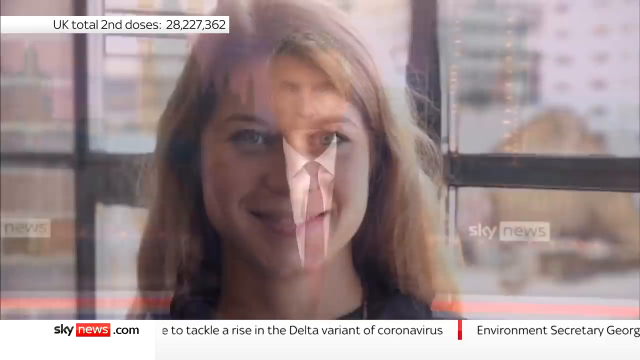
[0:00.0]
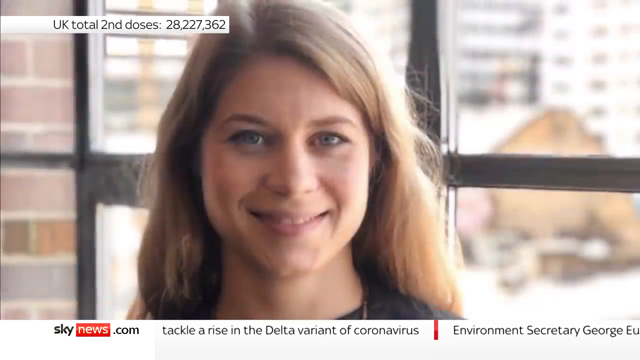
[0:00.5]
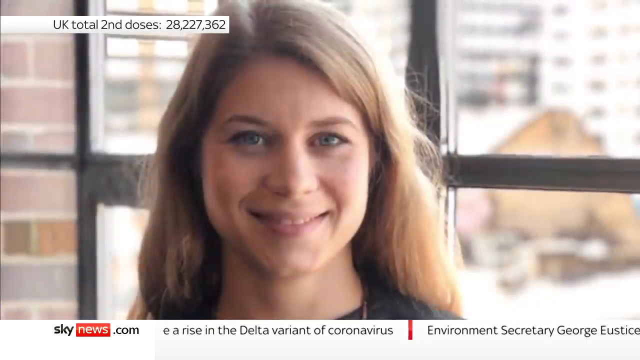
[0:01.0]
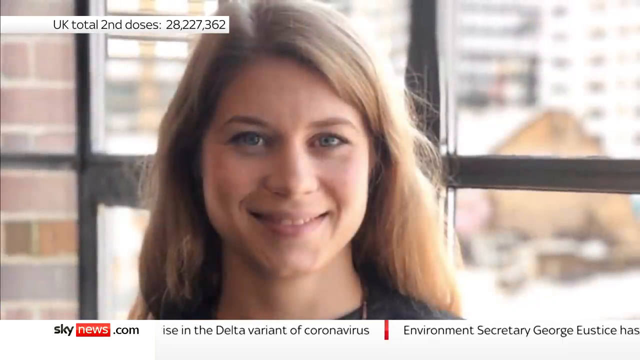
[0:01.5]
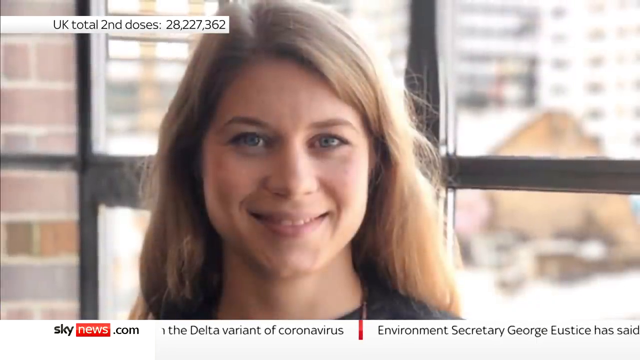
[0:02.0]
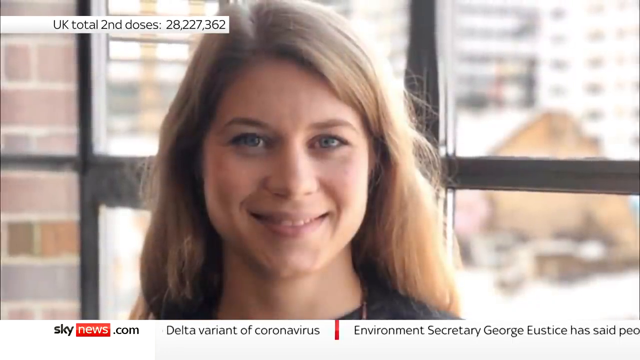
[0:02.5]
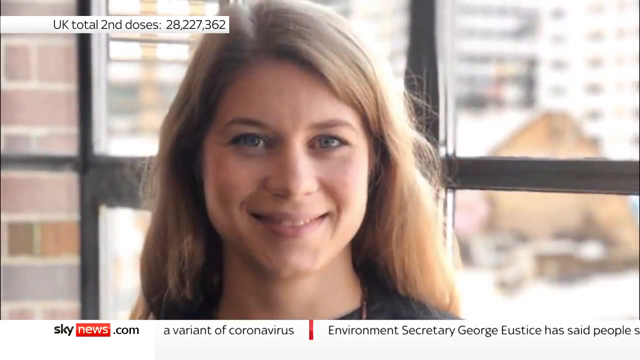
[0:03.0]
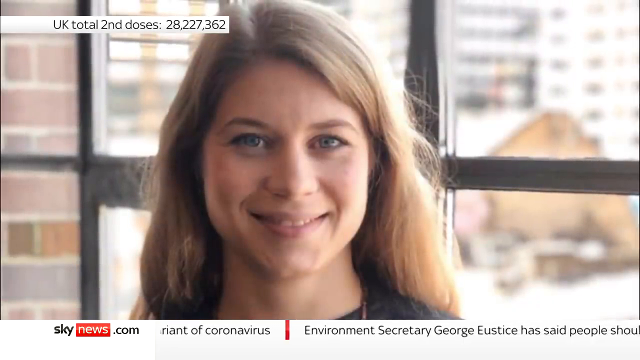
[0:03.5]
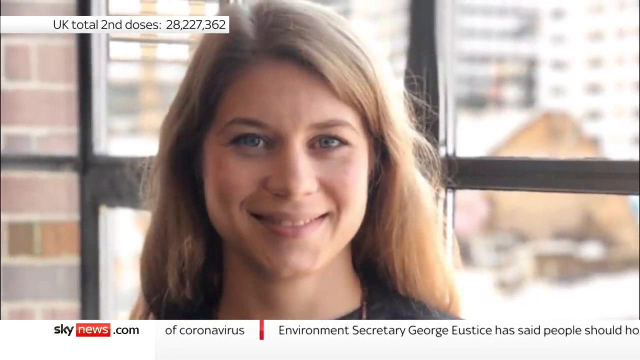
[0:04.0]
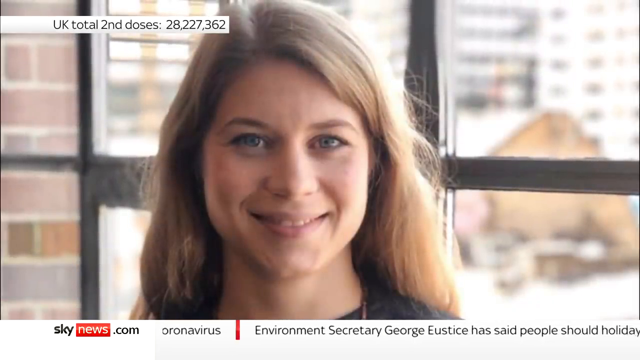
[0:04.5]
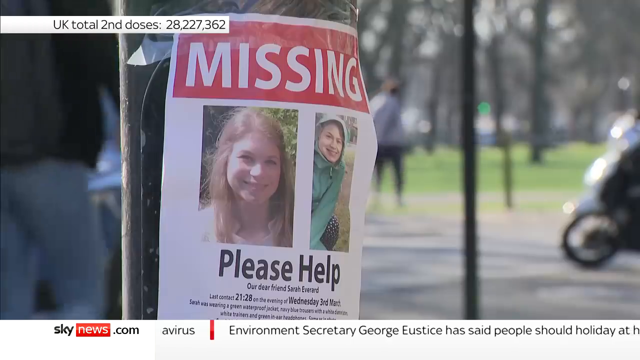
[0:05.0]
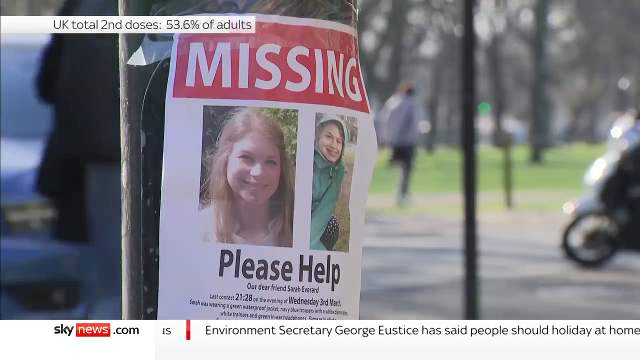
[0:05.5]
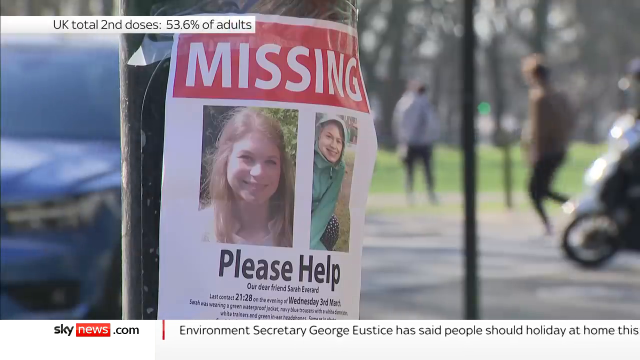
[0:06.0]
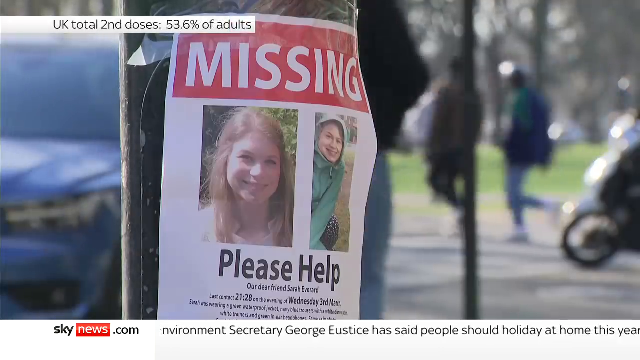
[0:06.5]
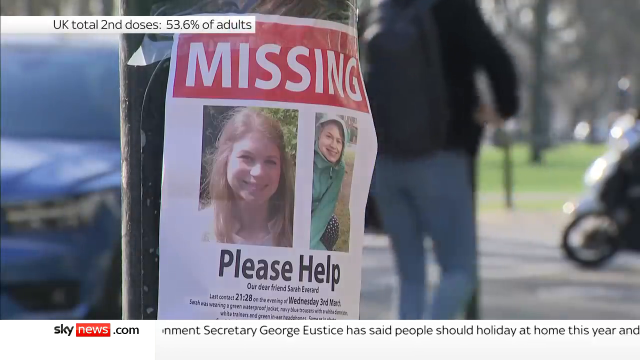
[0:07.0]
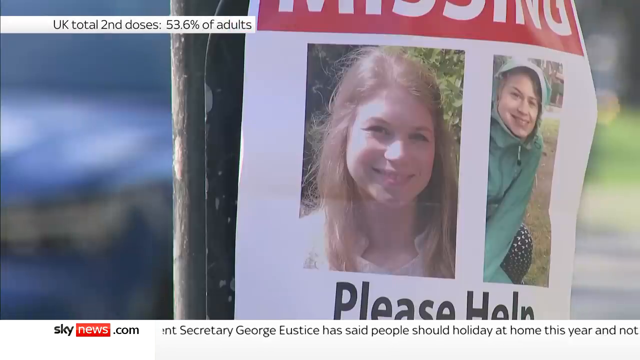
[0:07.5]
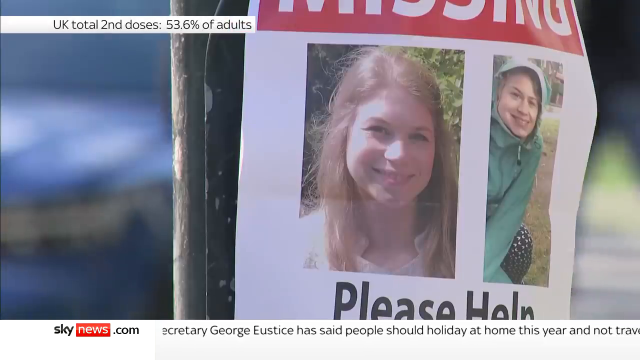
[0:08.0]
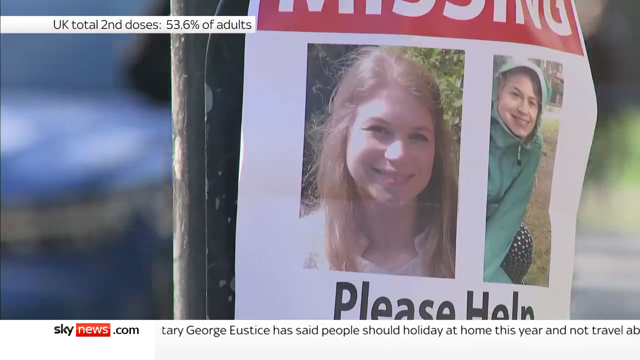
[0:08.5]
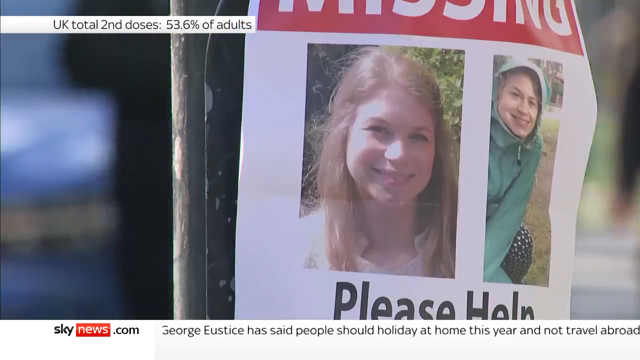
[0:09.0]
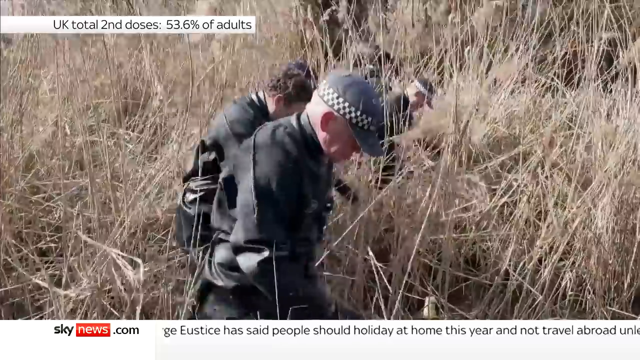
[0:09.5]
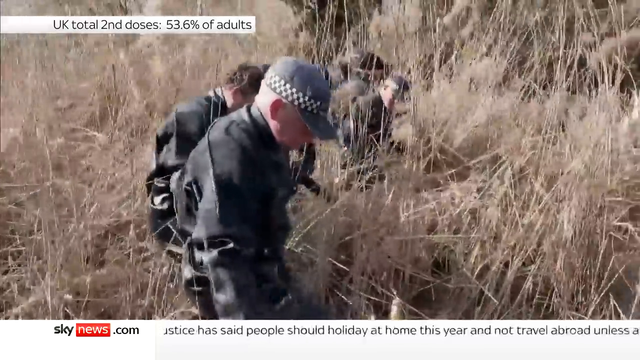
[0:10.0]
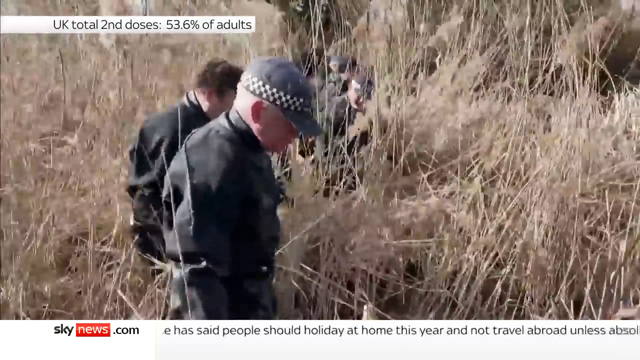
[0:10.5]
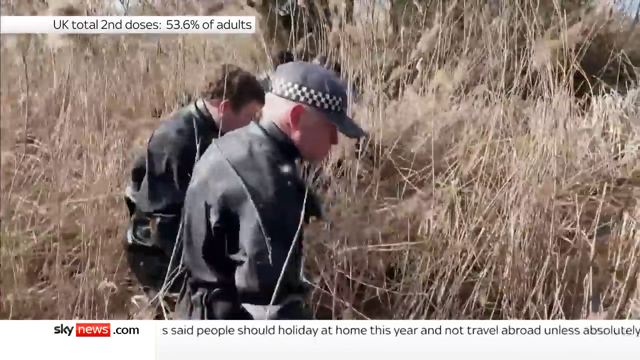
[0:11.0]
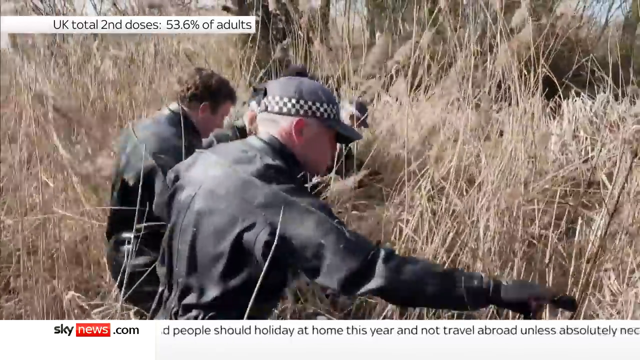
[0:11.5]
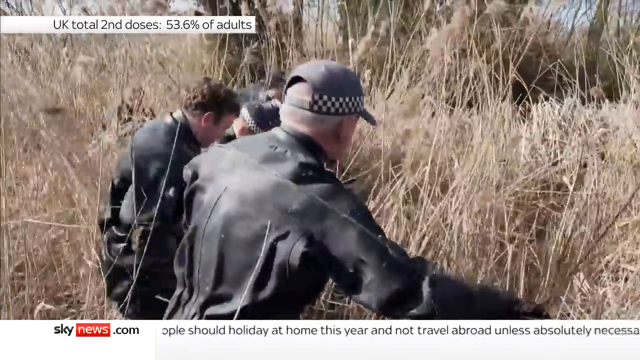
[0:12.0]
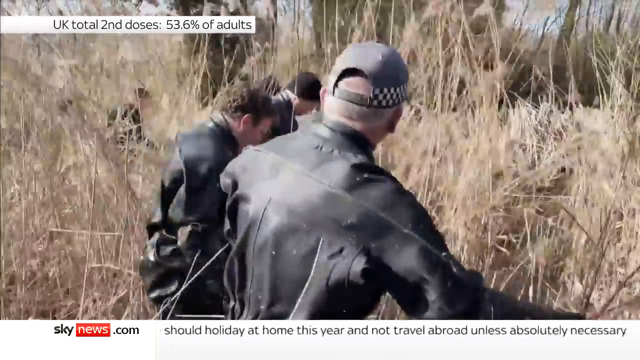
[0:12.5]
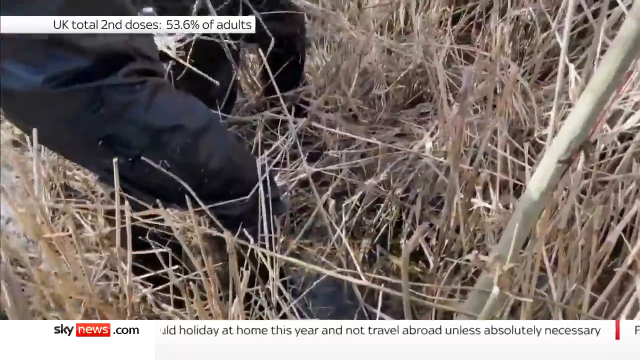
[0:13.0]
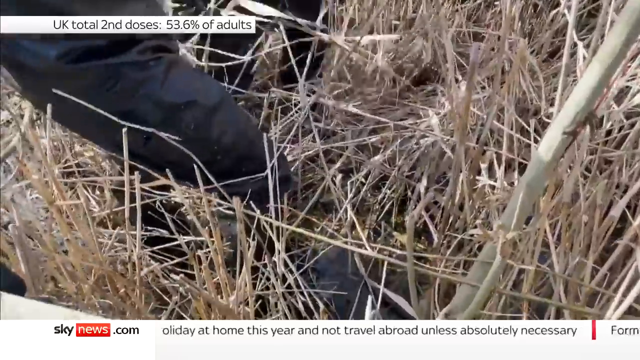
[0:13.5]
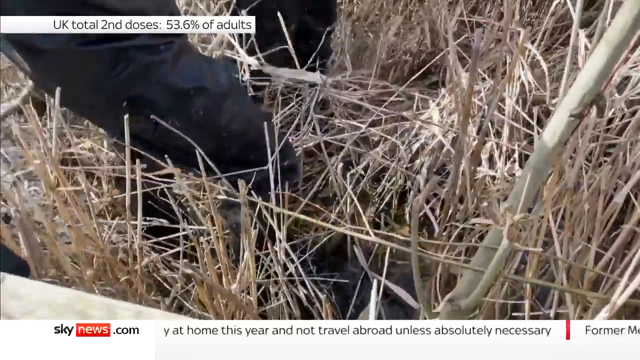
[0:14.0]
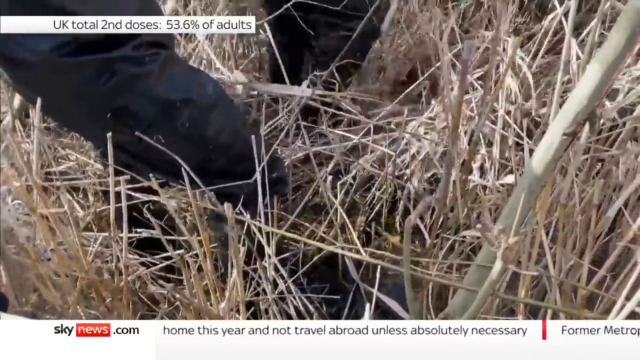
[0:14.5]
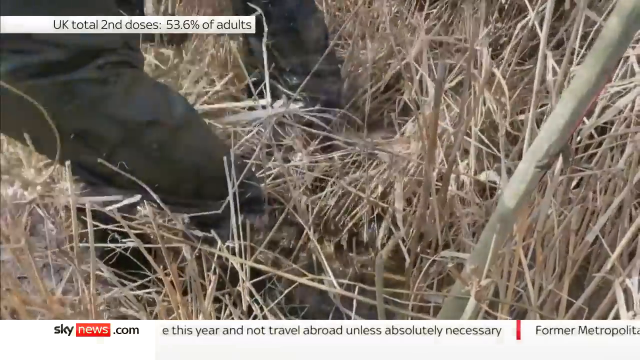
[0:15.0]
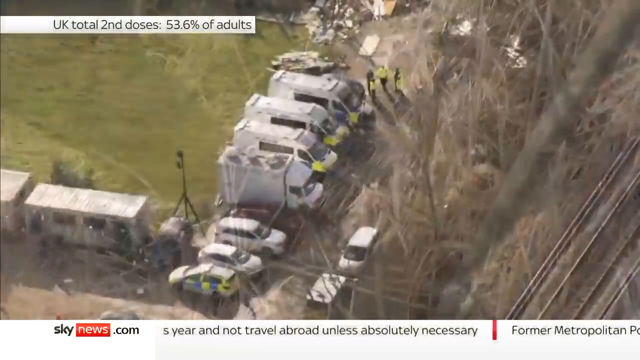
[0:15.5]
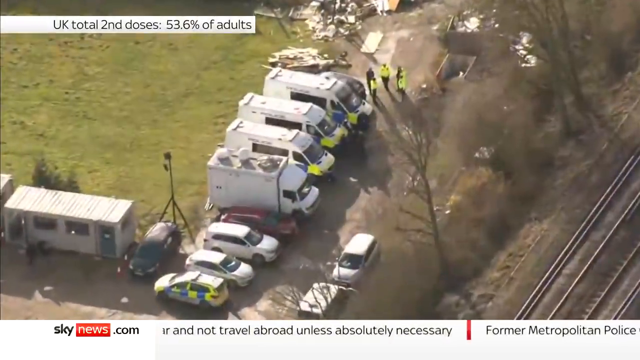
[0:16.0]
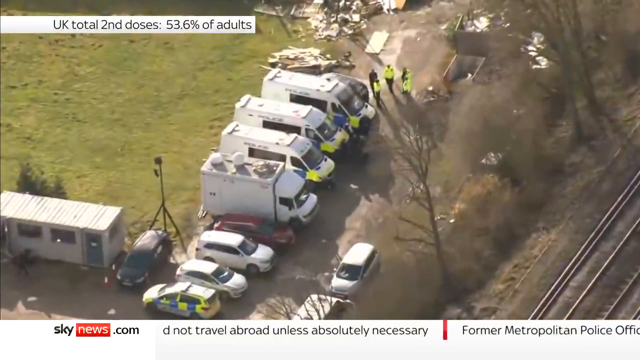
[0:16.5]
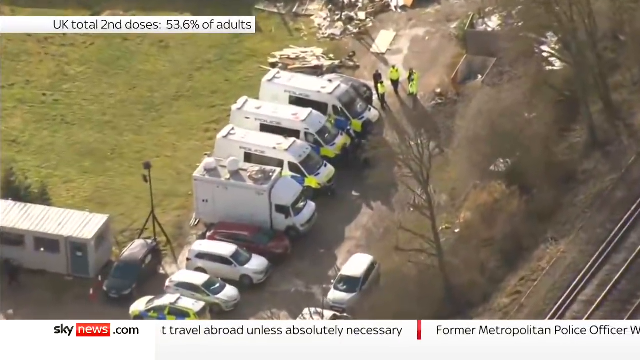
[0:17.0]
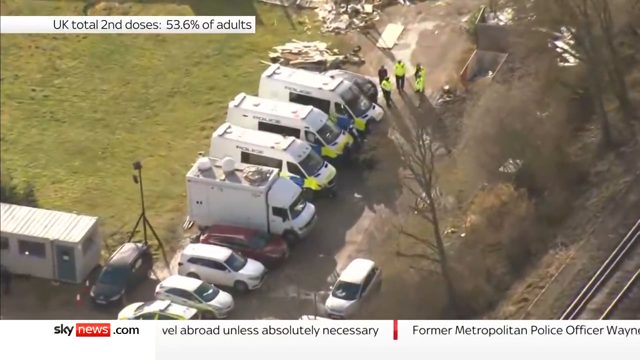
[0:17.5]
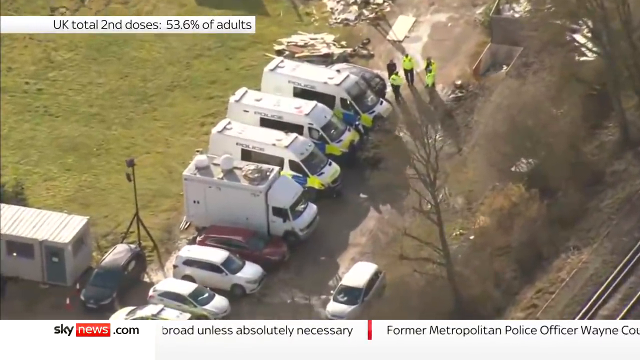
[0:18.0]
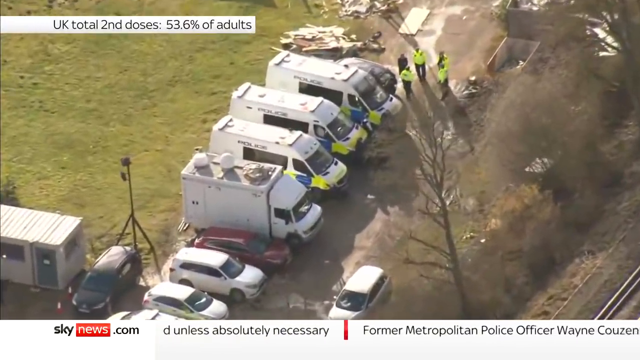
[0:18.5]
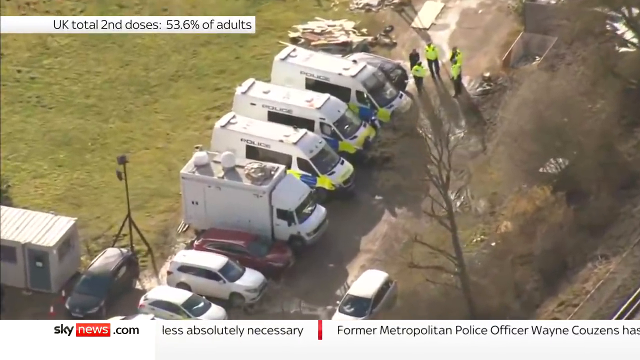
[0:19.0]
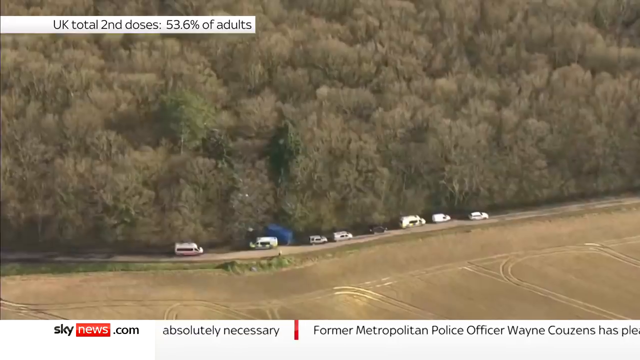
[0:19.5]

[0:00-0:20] A young woman, seemingly about 20 years old at most, appears to be the subject of a police search, apparently because she is missing. The scene looks like it is in the UK. There seem to be about 10 to 15 officers searching in the footage. A sign reads "missing persons please help". About six to seven officers search heavy brush, and there are a lot of vans with surveillance in the area. There are pictures of her on a paper. Officers are posted up looking along a perimeter, and people appear very concerned. The footage appears to be from Sky News.com.